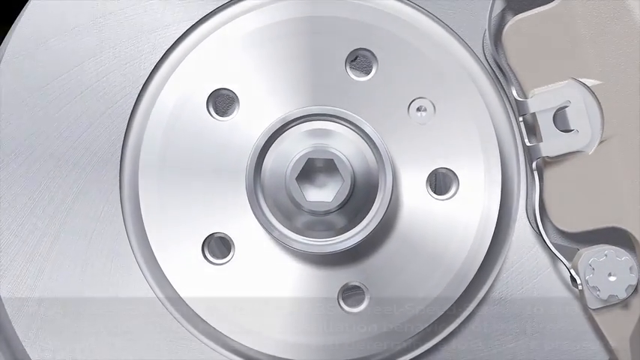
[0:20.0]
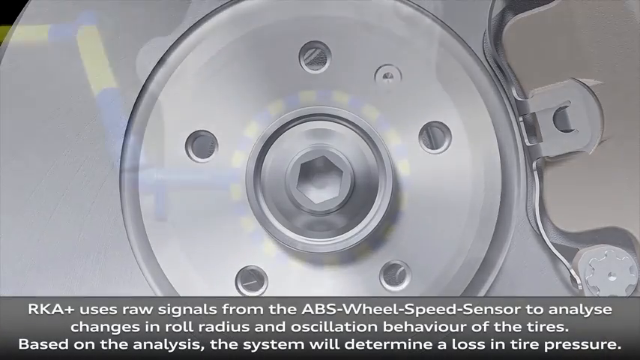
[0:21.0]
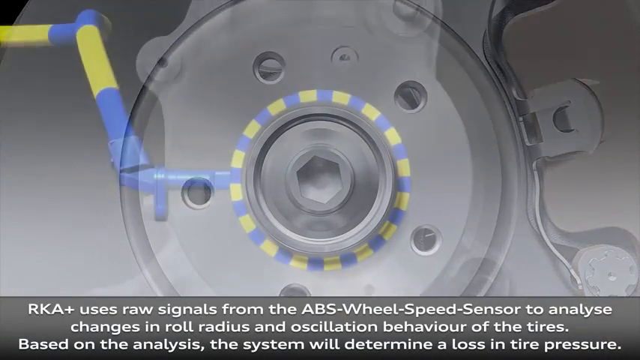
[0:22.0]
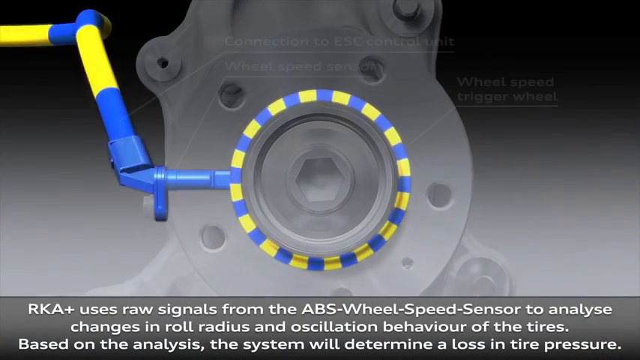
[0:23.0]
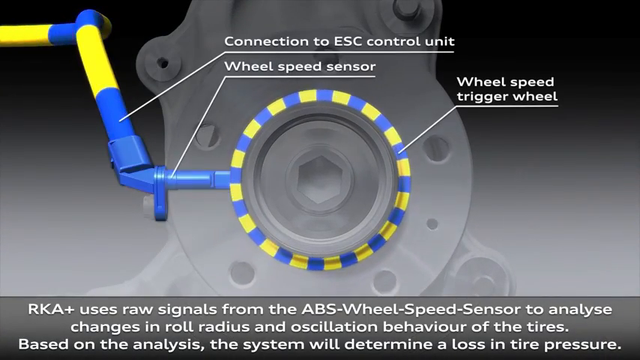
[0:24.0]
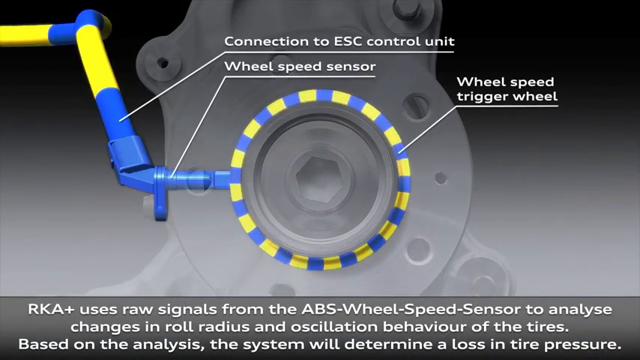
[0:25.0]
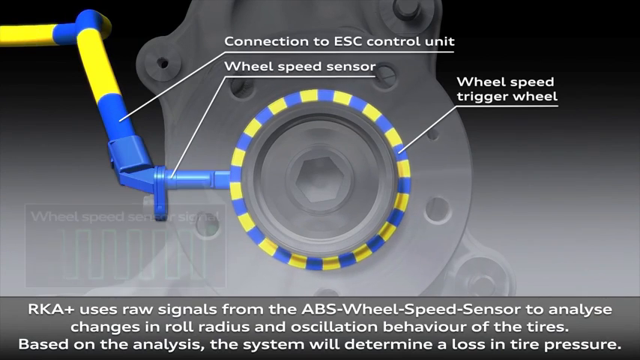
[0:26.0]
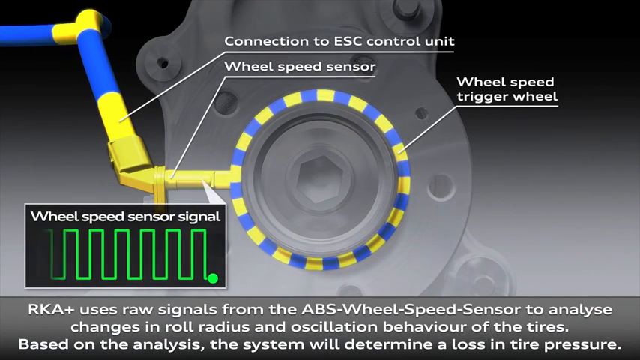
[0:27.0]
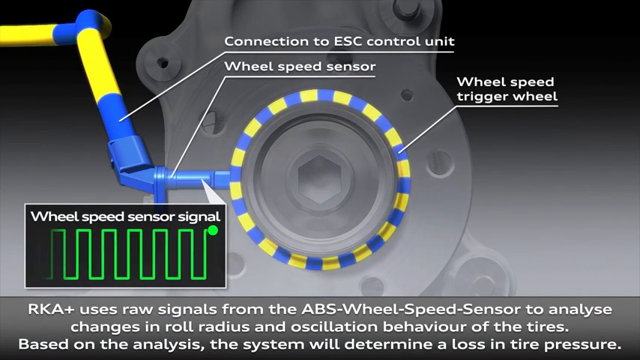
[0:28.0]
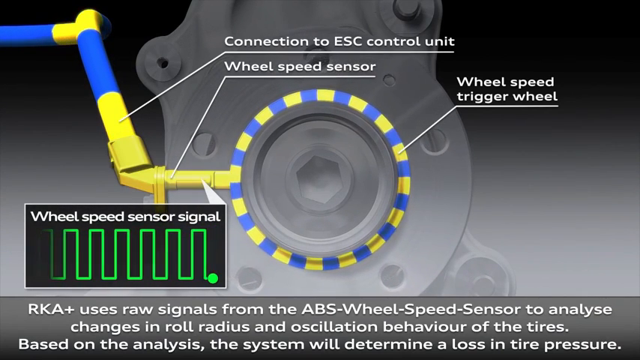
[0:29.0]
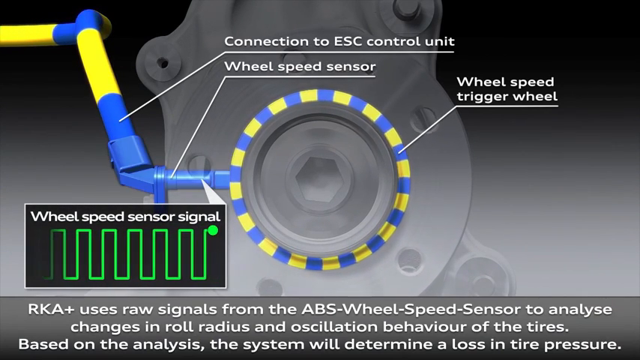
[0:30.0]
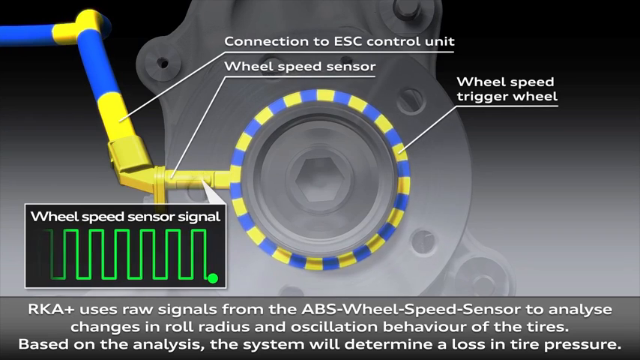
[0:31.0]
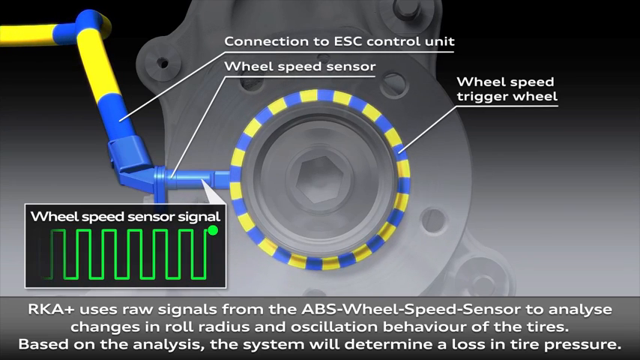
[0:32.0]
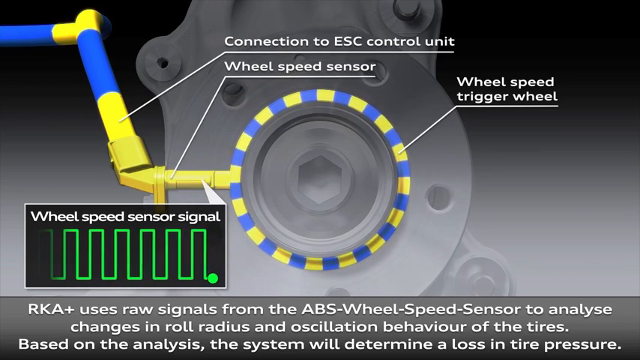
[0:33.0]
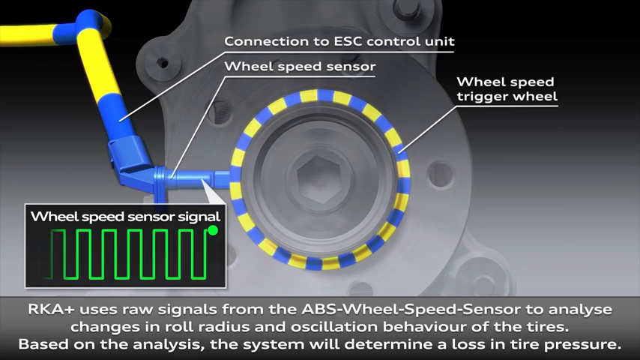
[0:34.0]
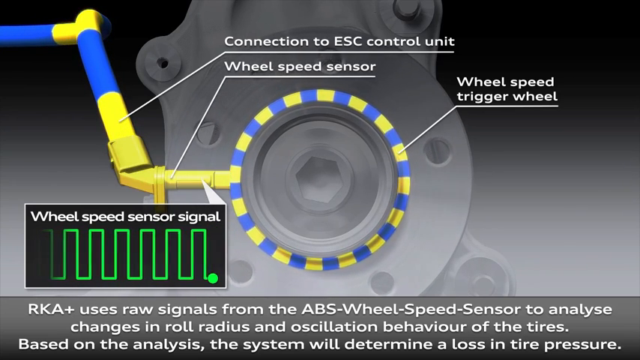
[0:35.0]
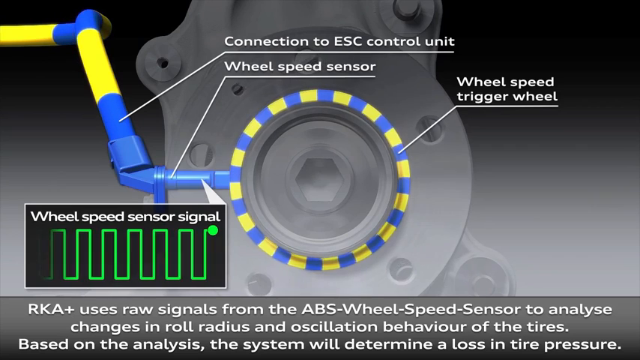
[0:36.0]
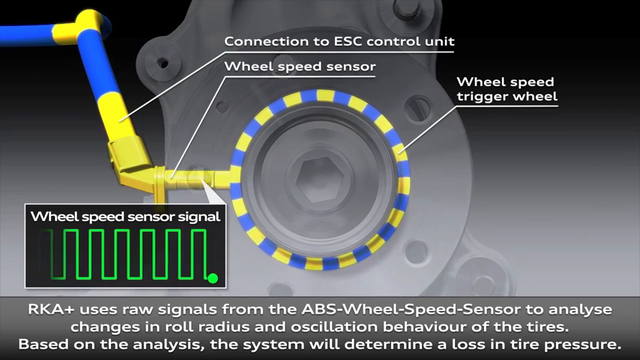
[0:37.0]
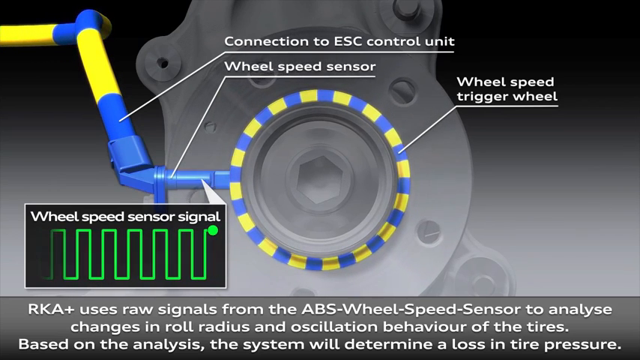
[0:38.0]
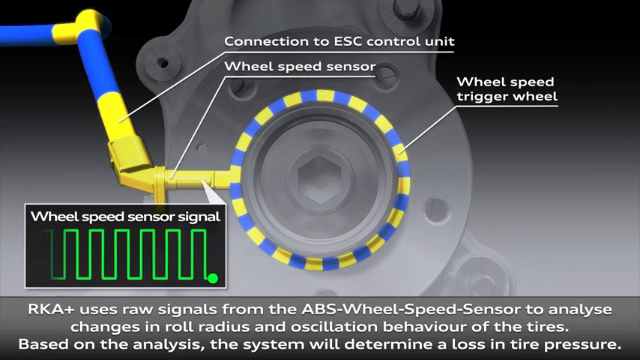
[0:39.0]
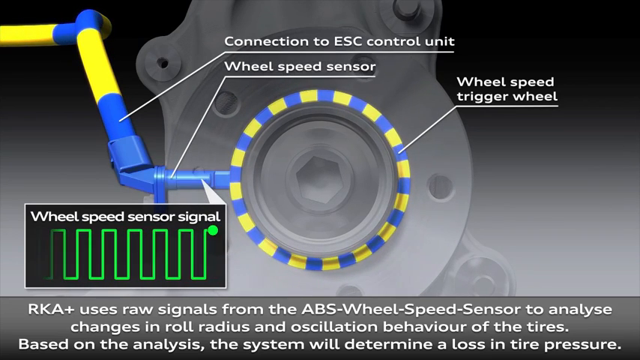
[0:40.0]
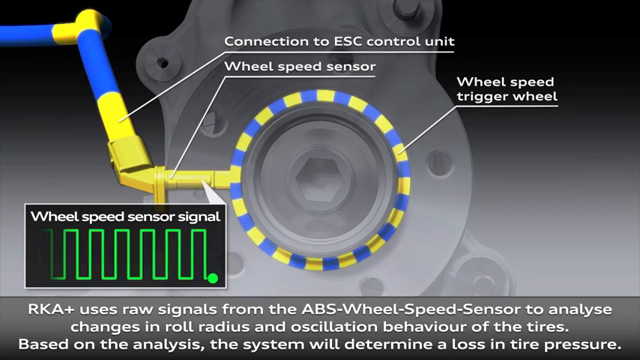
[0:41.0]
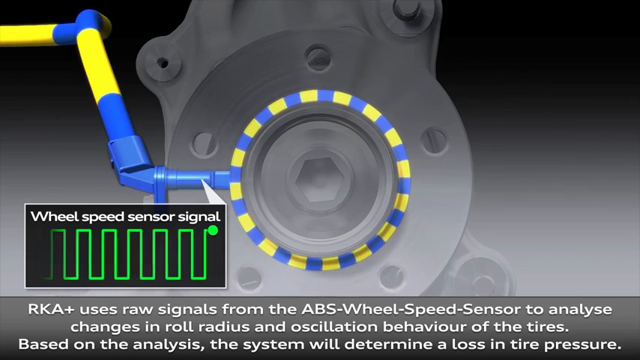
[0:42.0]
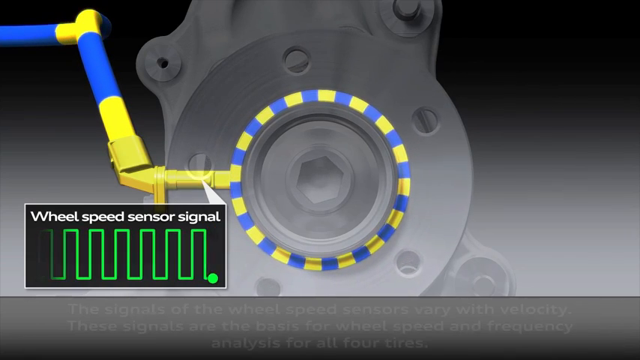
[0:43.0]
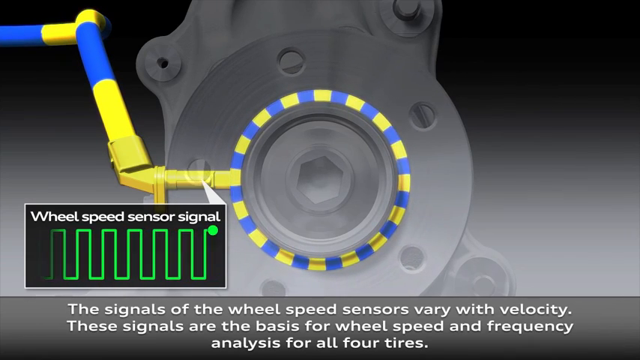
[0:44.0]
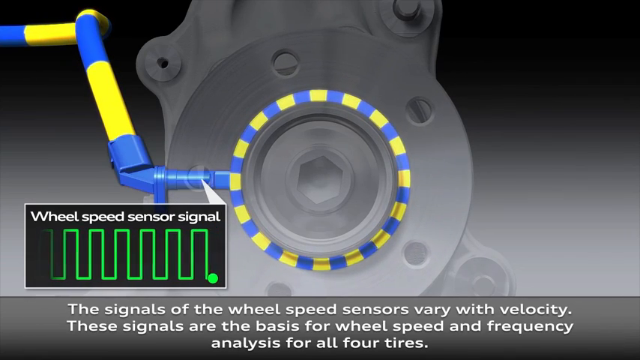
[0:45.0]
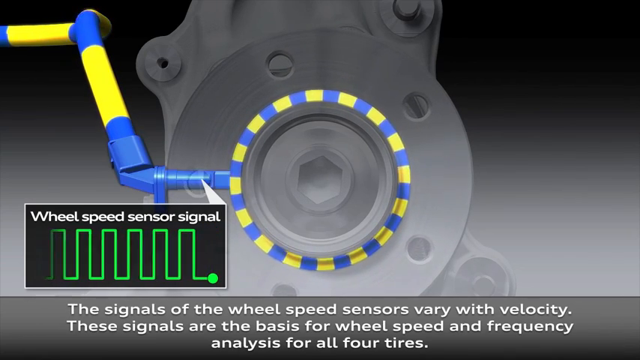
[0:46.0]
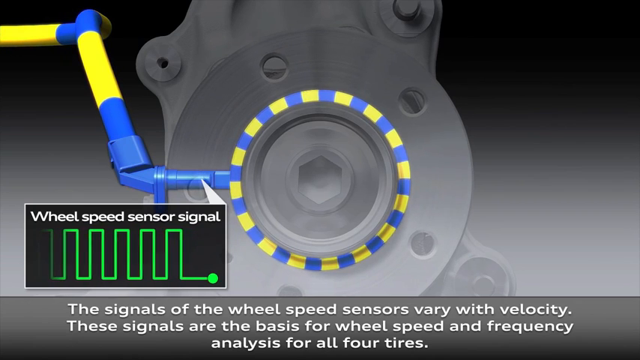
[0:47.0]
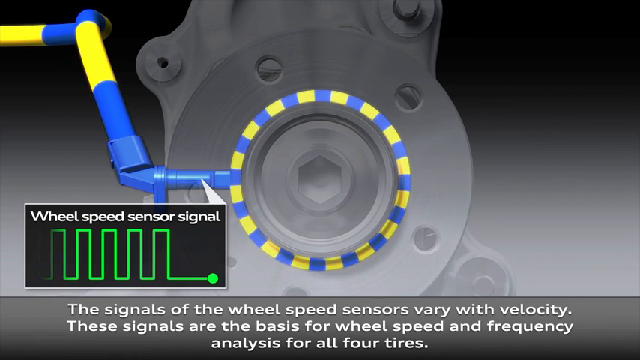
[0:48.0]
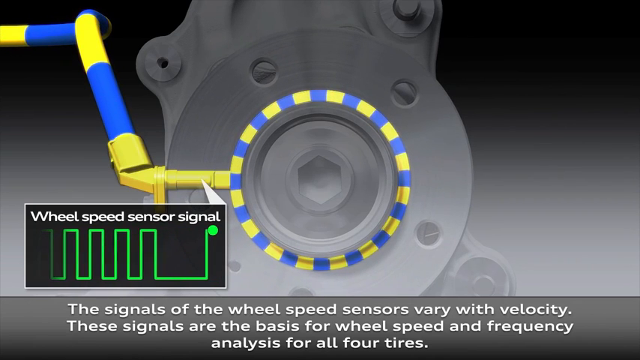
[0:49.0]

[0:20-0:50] Inside the tire, what looks like the rotor spins. On top are labeled sections: "wheel speed sensor" to the left, "connection to ESC control unit" also to the left, and "wheel speed trigger wheel," which appears to be on the right side. Text at the bottom reads: "RKA + uses raw signals from the ABS wheel speed sensor to analyze changes in roll radius and oscillation behavior of the tires," and goes on to say the system will determine a loss in tire pressure. In the bottom left is some sort of indicator labeled "wheel speed sensor signal," with a little green circle that keeps moving up and down, leaving a line trail behind it.